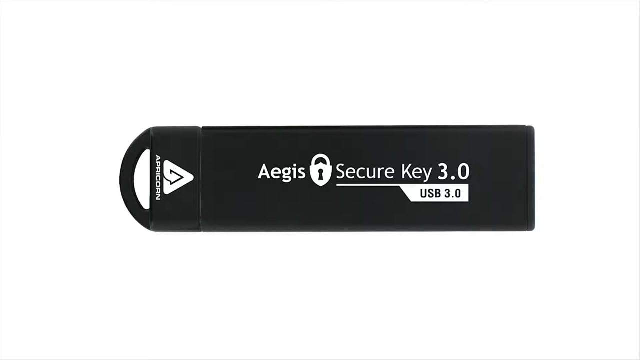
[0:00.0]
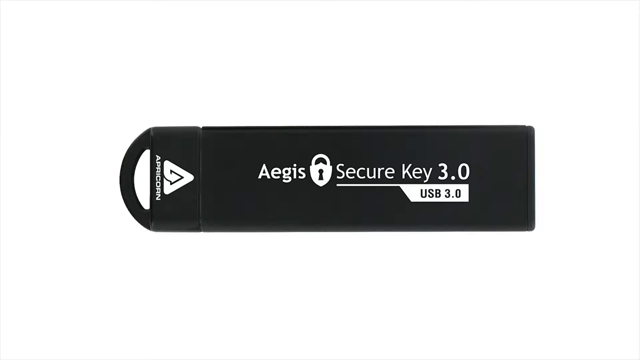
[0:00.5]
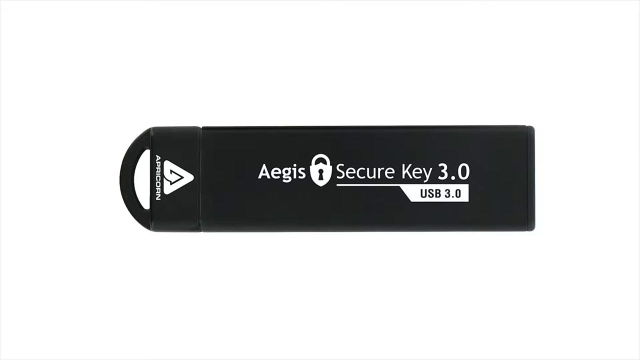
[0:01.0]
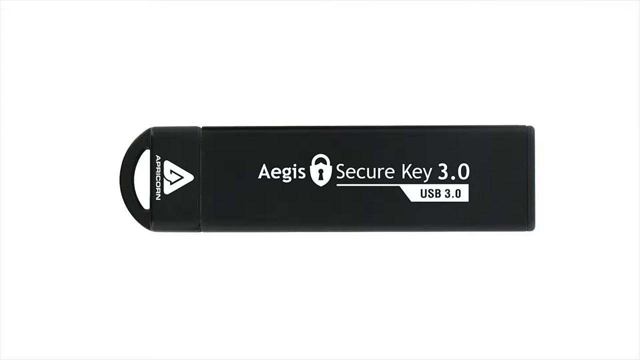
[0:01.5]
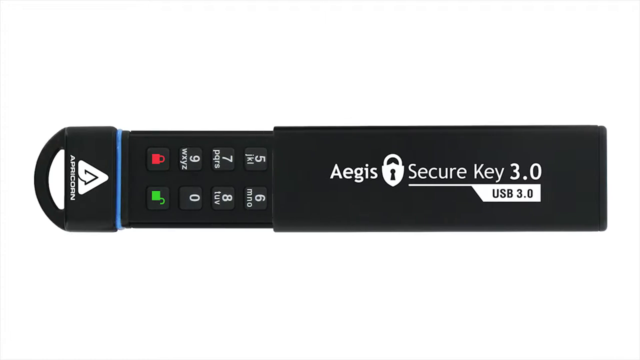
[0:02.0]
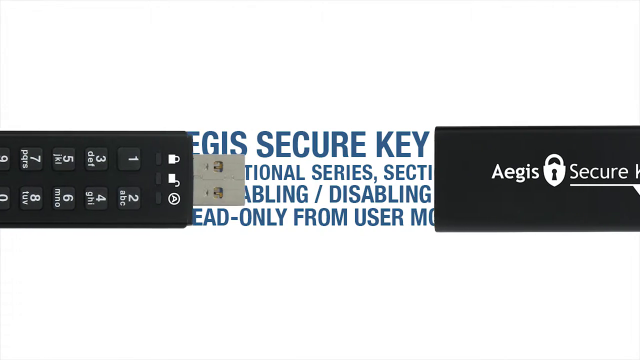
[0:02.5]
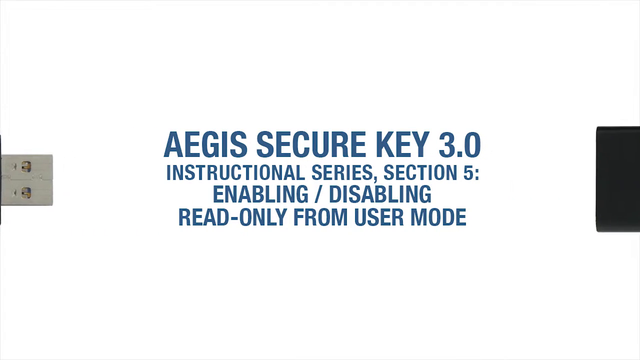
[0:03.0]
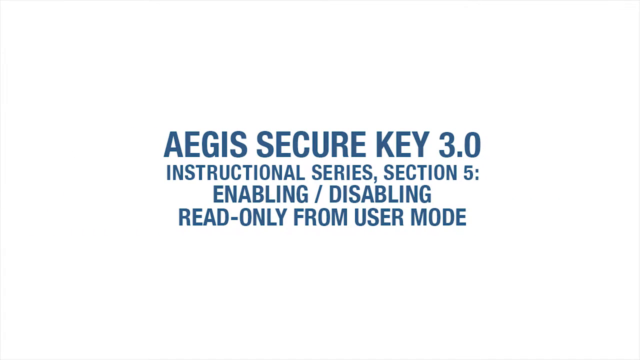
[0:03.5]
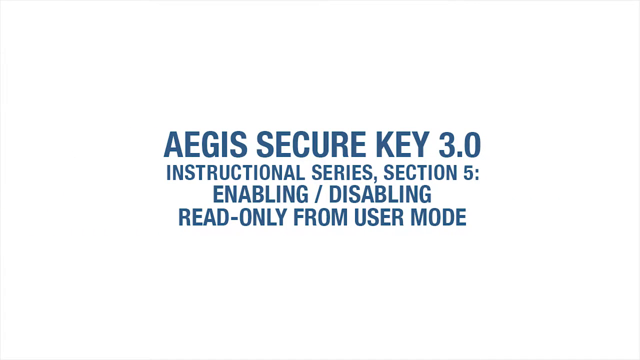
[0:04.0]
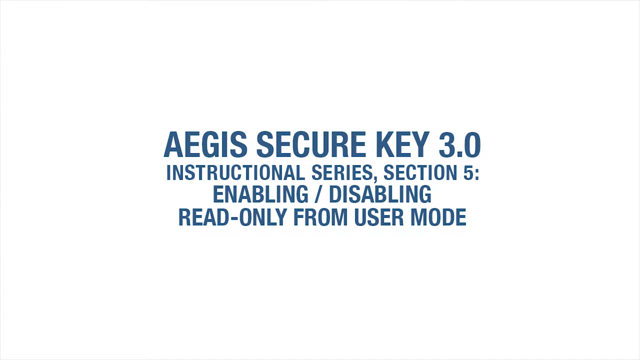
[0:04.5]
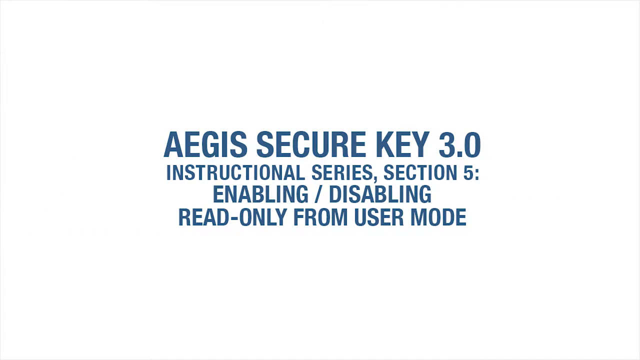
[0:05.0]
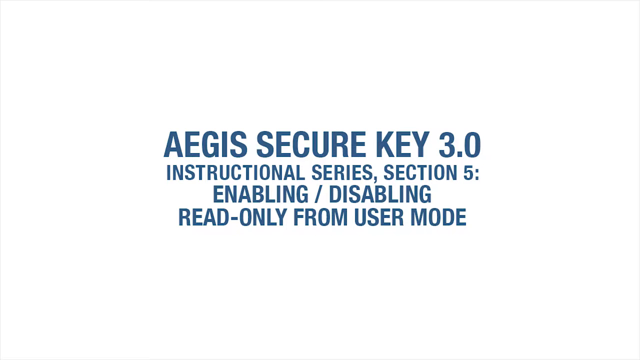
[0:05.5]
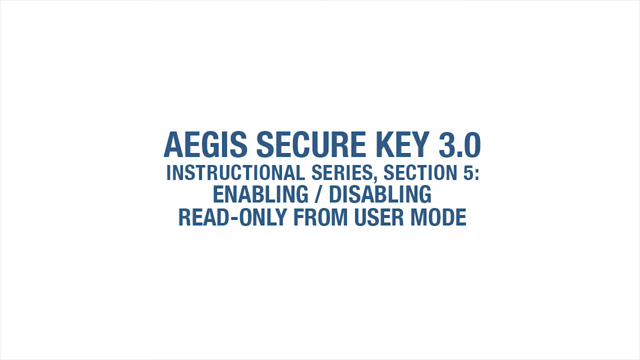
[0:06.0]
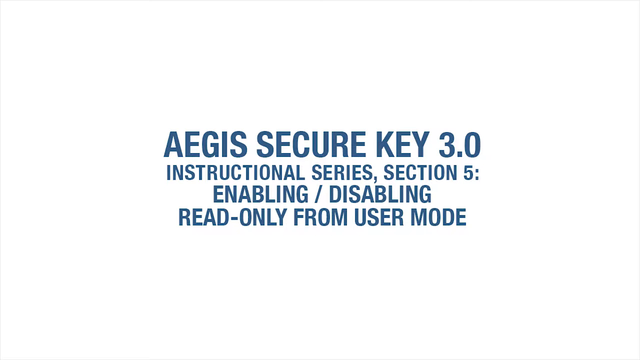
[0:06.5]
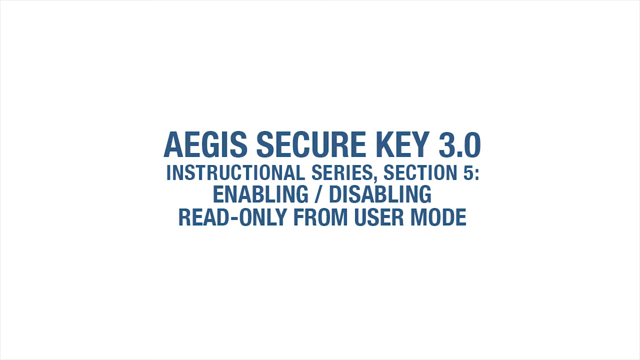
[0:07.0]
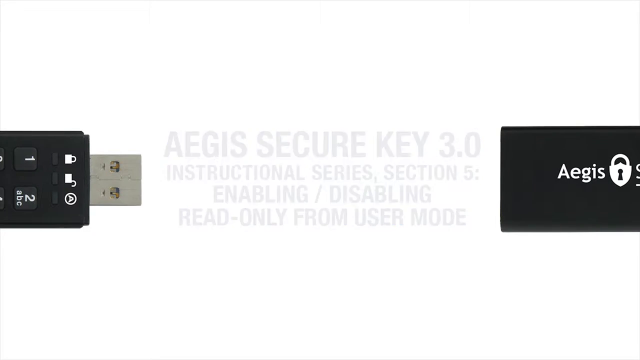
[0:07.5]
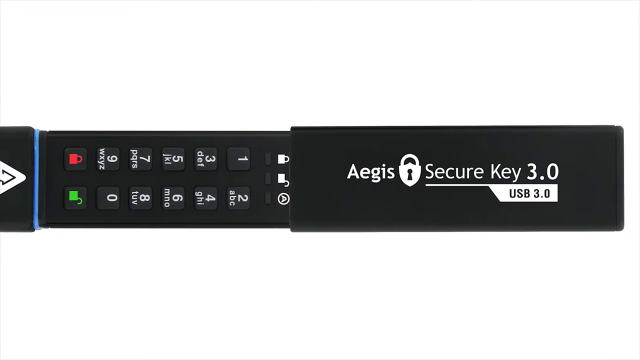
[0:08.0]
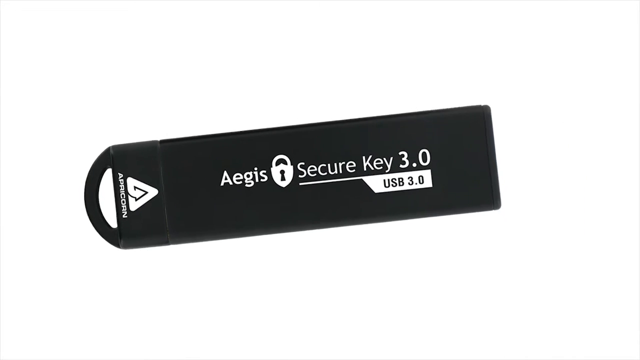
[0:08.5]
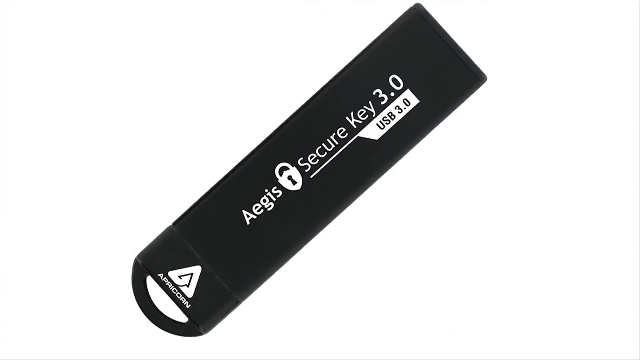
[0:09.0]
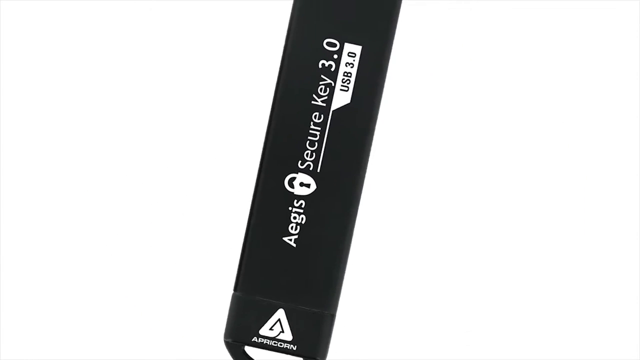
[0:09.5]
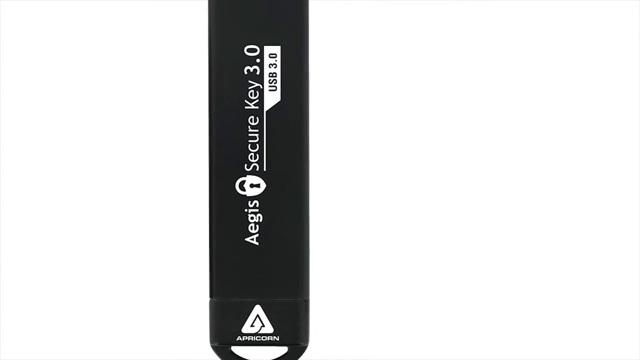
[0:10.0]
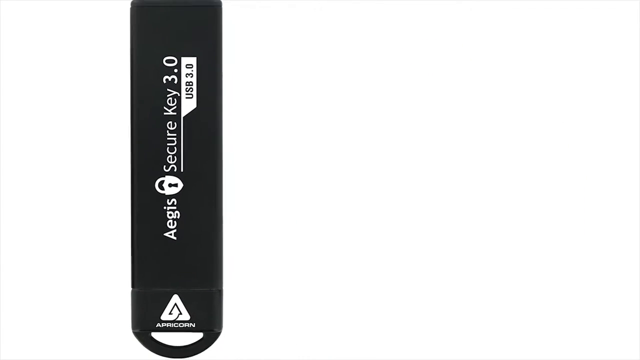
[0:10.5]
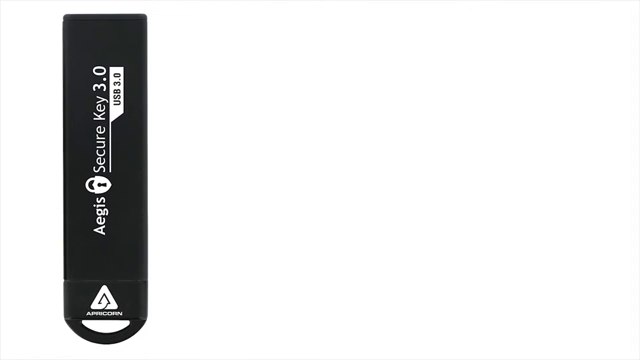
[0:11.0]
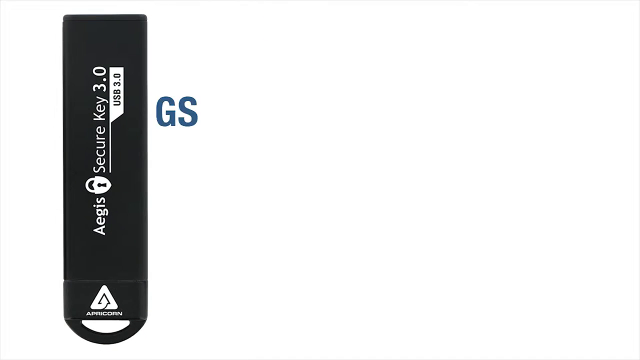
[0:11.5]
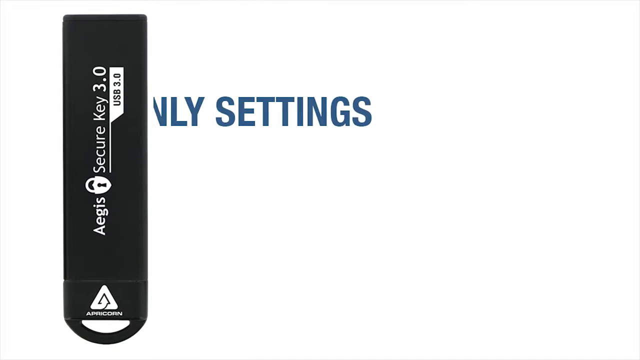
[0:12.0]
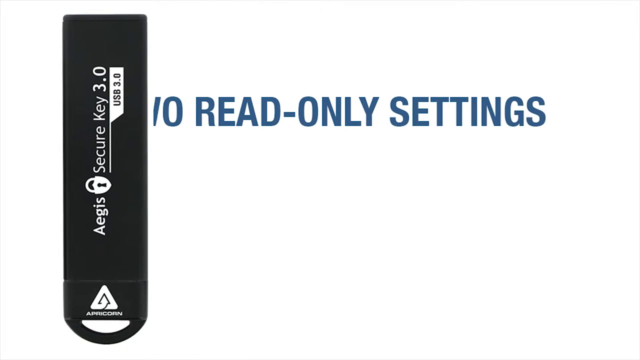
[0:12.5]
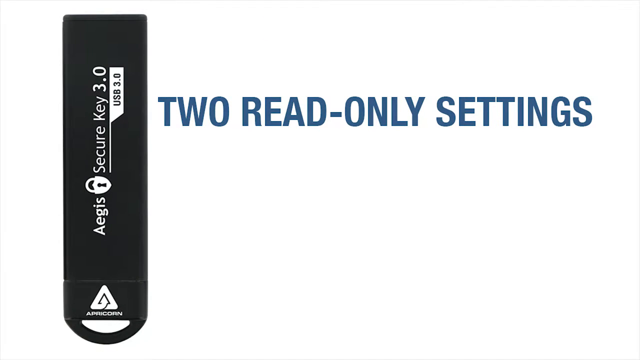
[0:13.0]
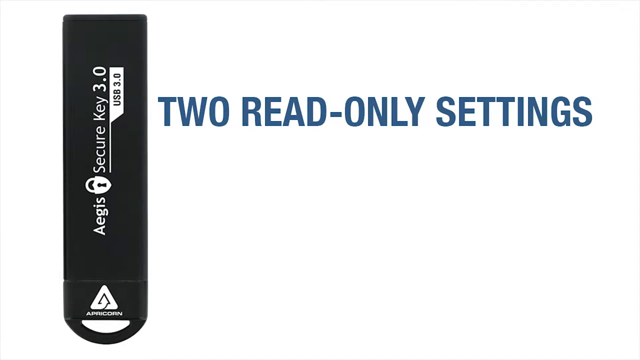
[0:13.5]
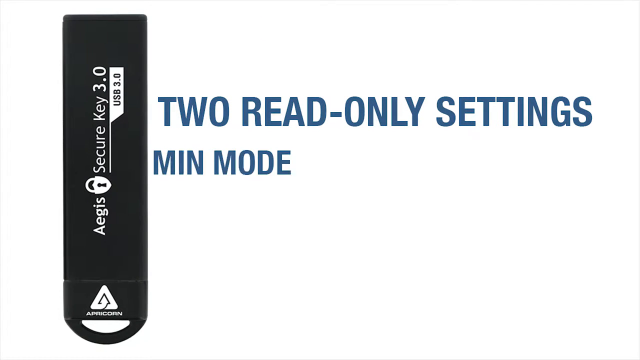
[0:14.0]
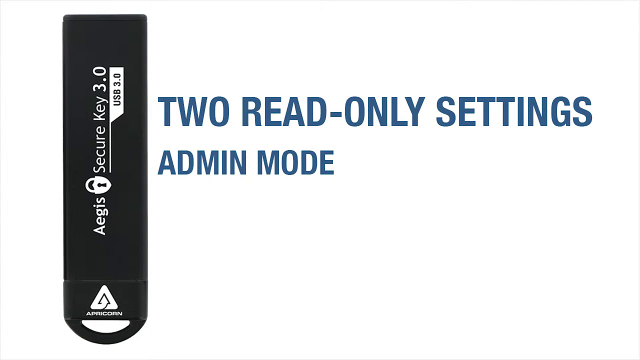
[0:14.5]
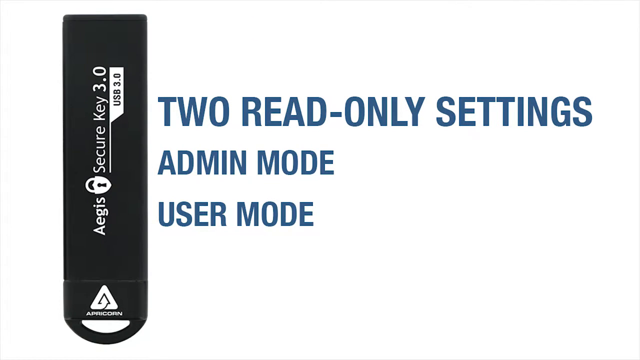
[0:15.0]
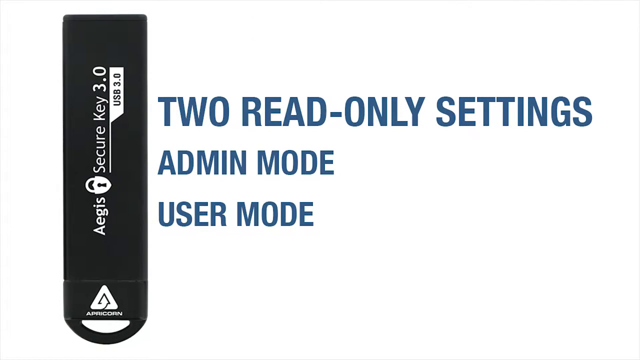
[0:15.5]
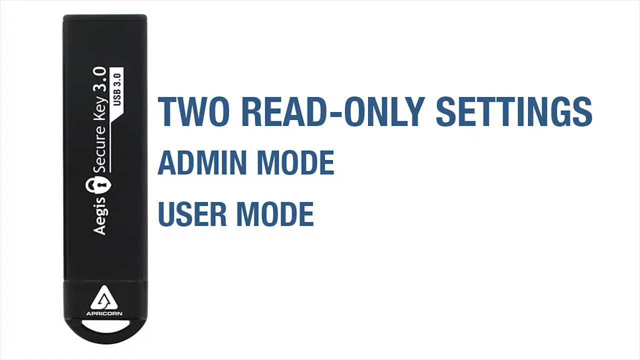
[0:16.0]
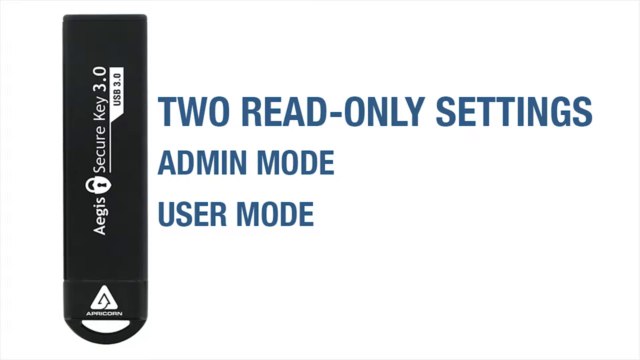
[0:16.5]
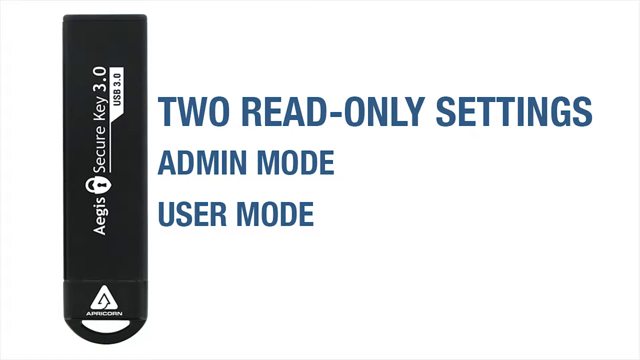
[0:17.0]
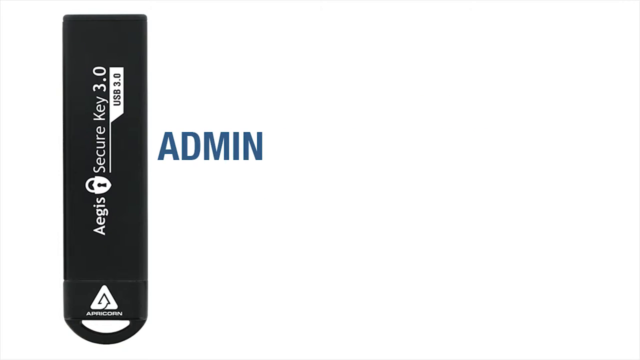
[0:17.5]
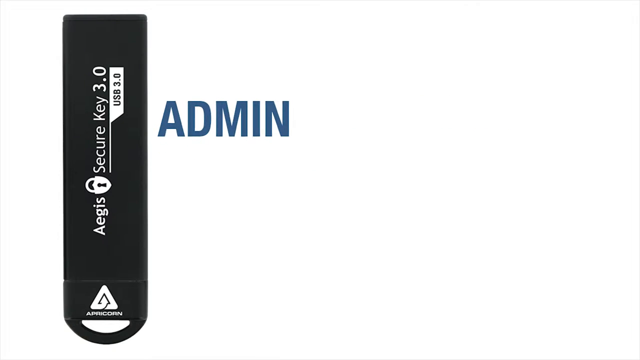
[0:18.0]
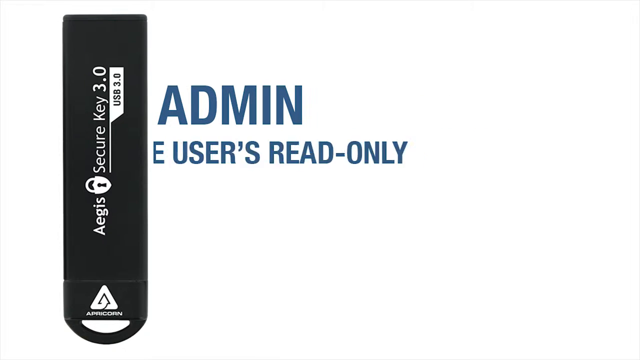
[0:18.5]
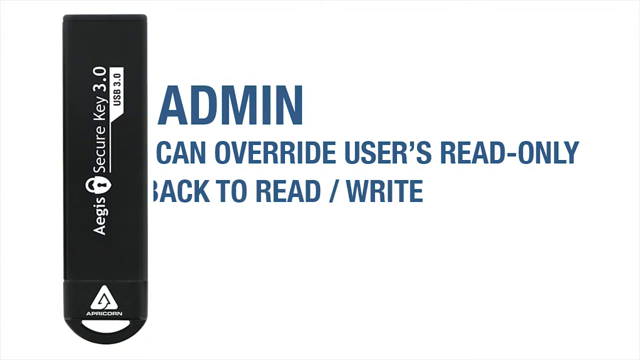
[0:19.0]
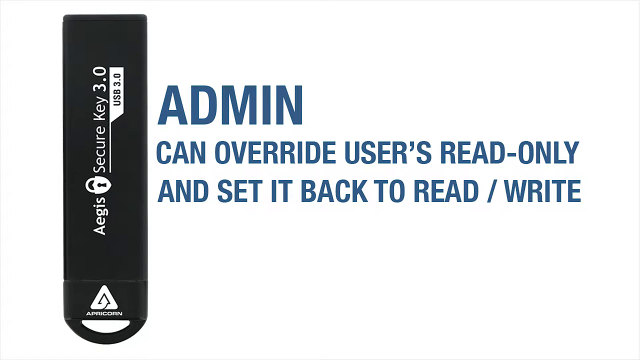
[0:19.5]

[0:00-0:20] The video opens with instructions titled "AEGIS Secure Key 3.0 Instructional Series, Section 5, Enabling or Disenabling Read-Only from User Mode." It concerns the Secure Key 3.0, a USB 3.0 device. The words "read only settings" appear on the screen, listing two modes: the administration (admin) mode and the user mode. Under admin mode, the screen indicates that the admin can override the user's read-only setting and set it back to read/write.